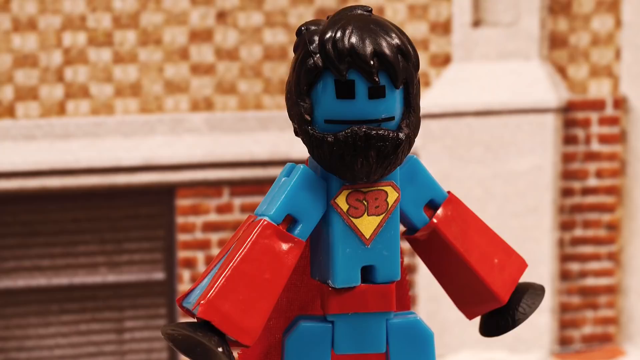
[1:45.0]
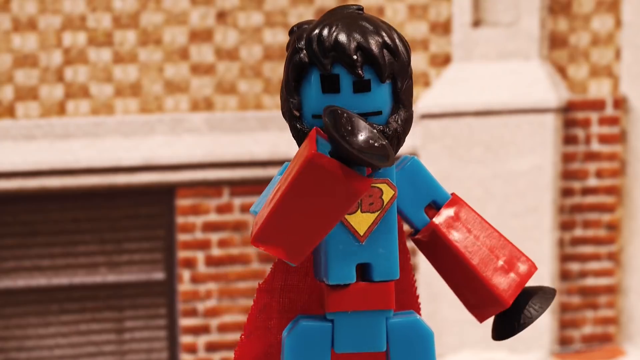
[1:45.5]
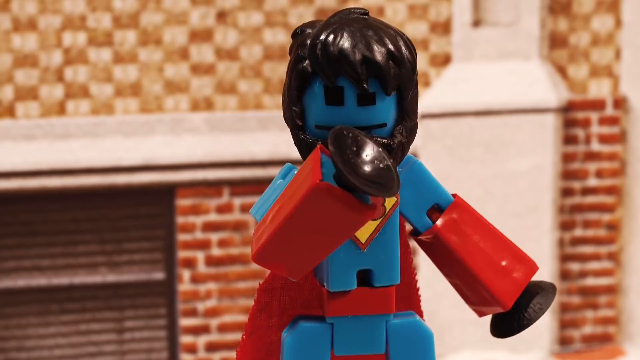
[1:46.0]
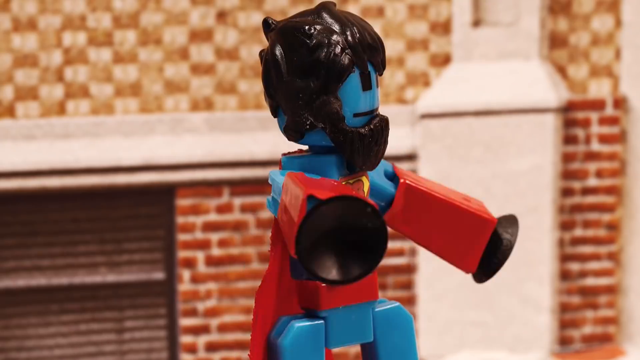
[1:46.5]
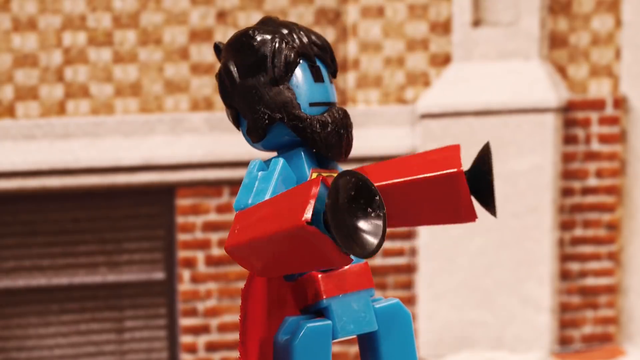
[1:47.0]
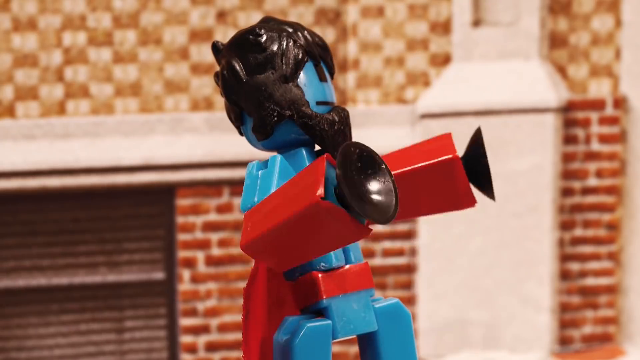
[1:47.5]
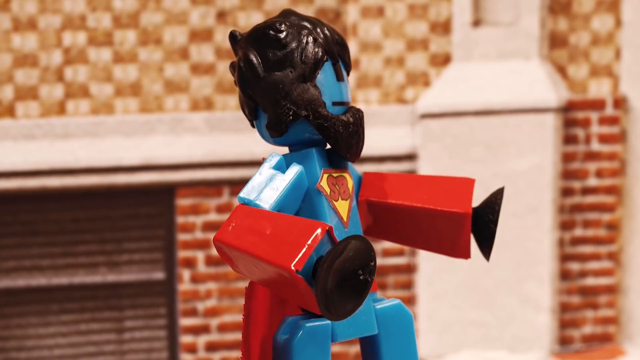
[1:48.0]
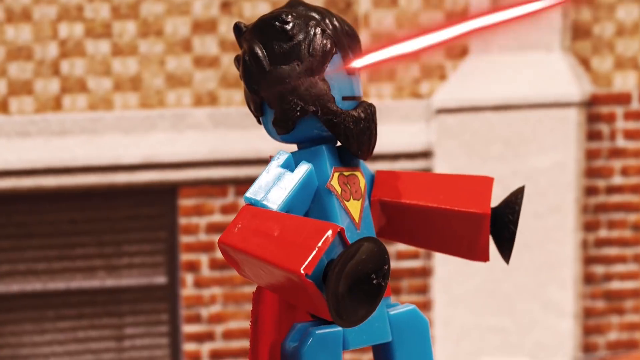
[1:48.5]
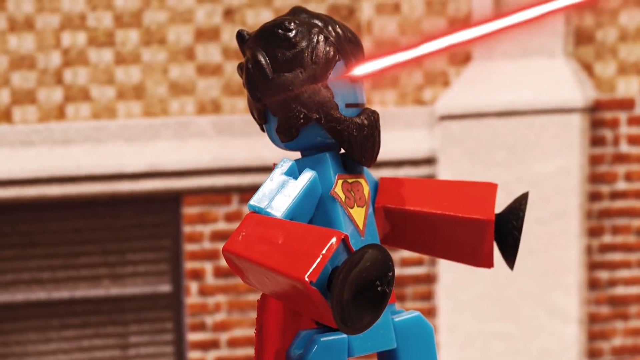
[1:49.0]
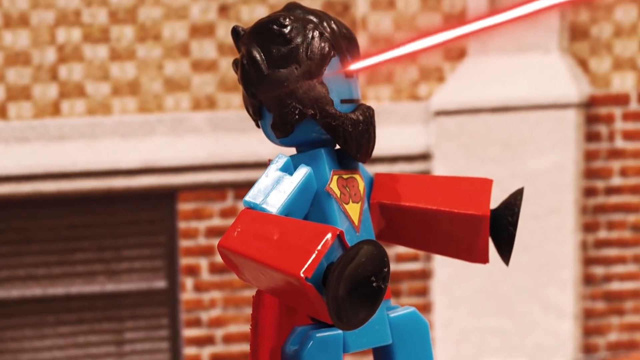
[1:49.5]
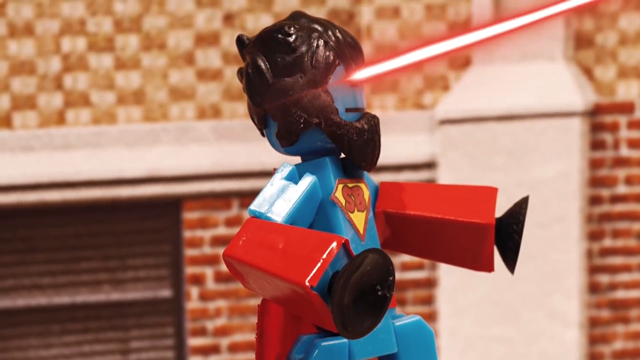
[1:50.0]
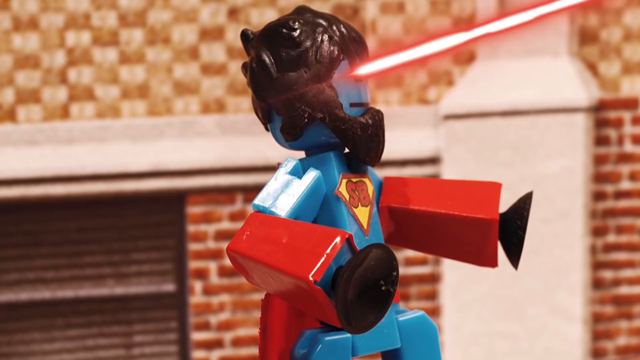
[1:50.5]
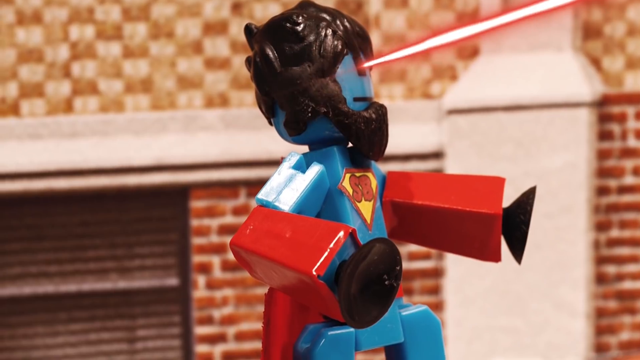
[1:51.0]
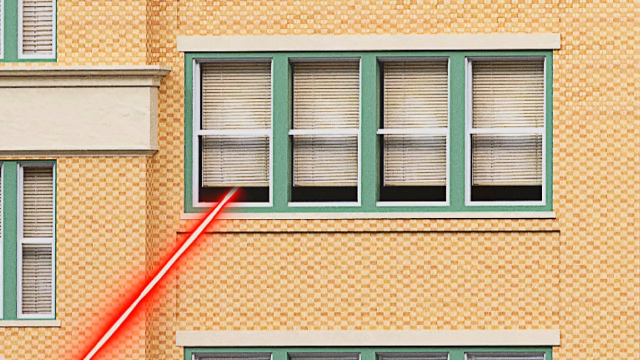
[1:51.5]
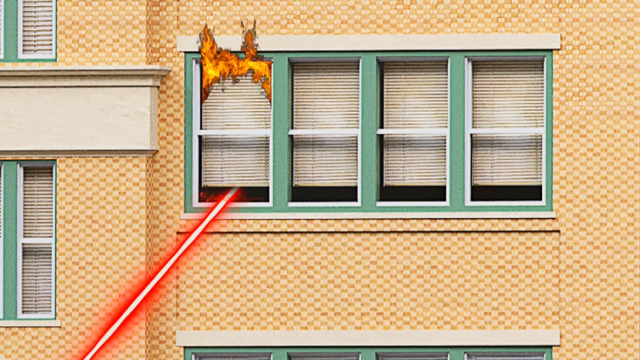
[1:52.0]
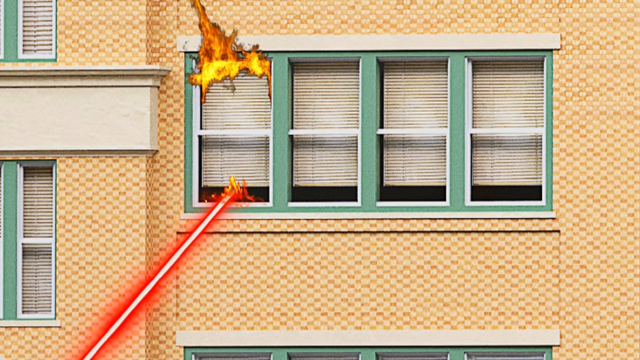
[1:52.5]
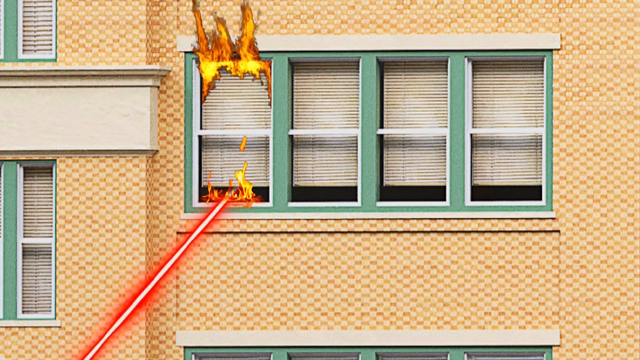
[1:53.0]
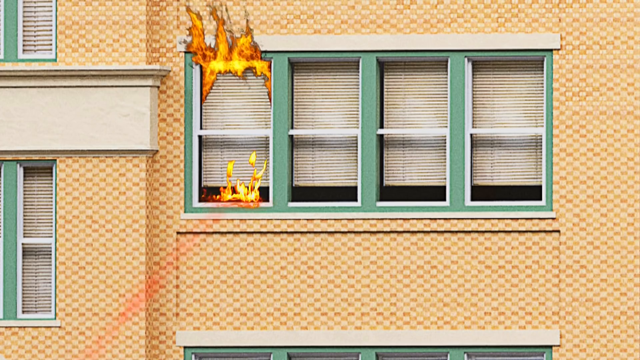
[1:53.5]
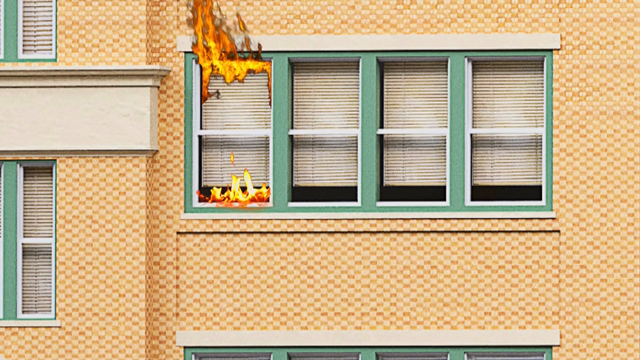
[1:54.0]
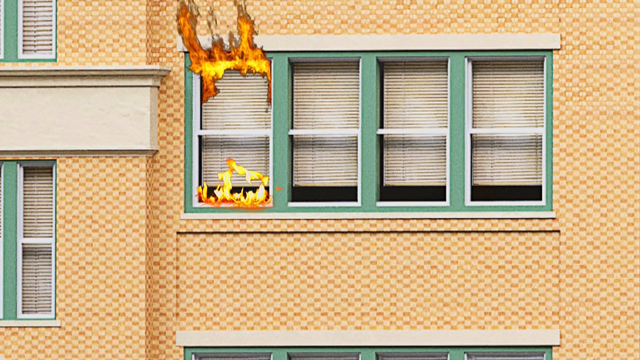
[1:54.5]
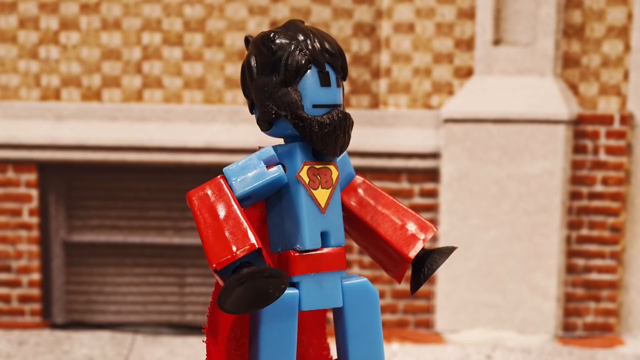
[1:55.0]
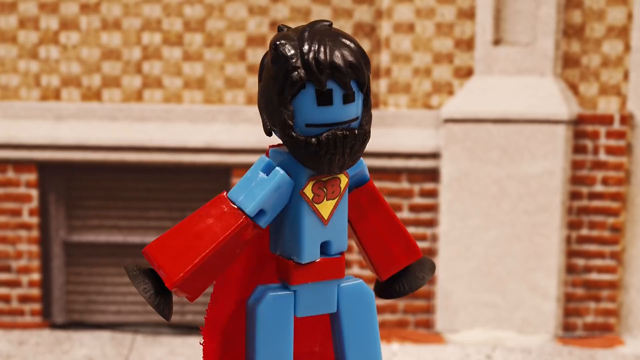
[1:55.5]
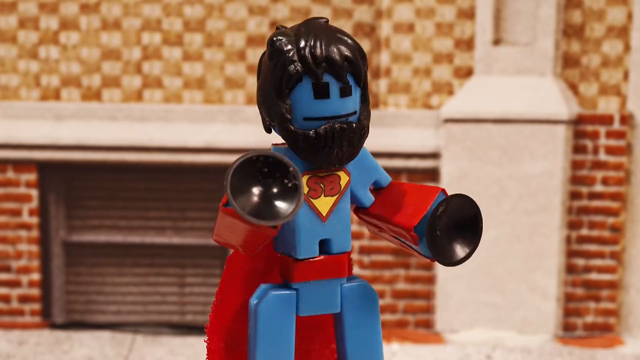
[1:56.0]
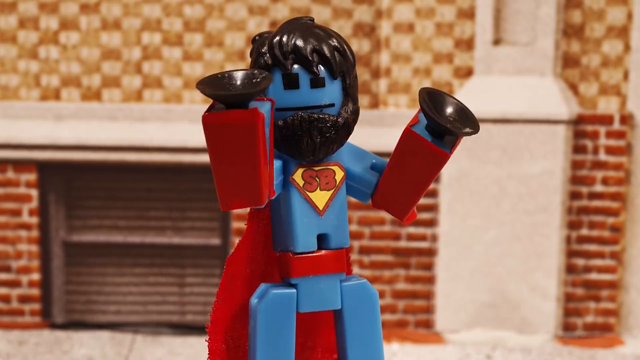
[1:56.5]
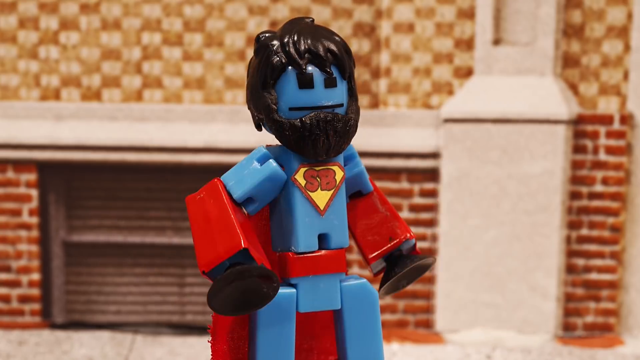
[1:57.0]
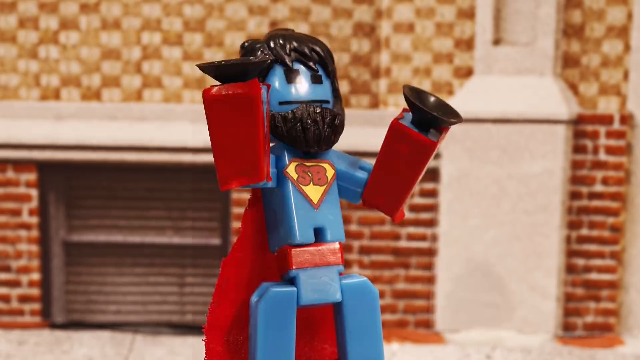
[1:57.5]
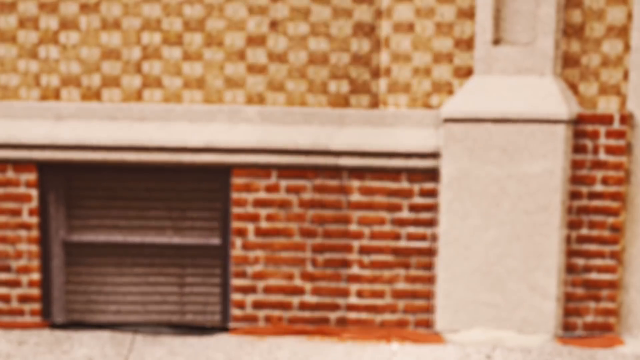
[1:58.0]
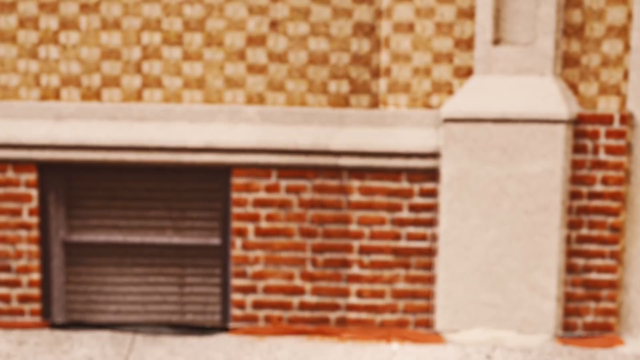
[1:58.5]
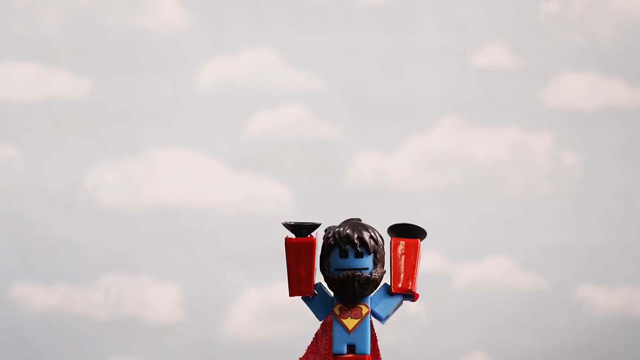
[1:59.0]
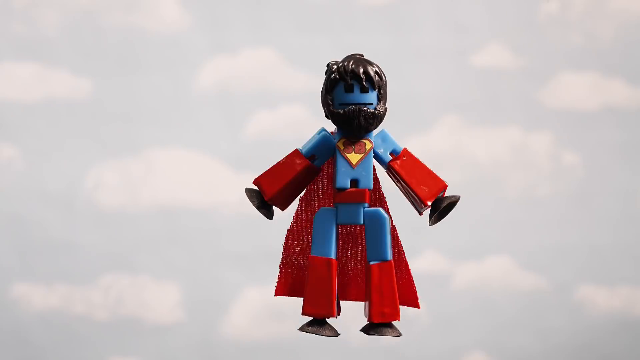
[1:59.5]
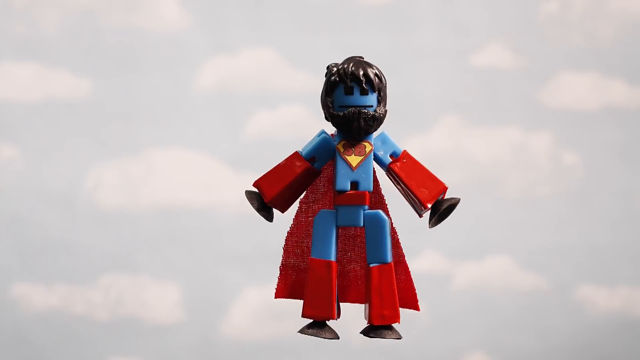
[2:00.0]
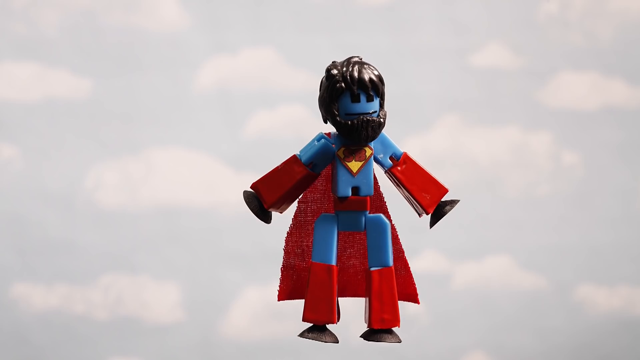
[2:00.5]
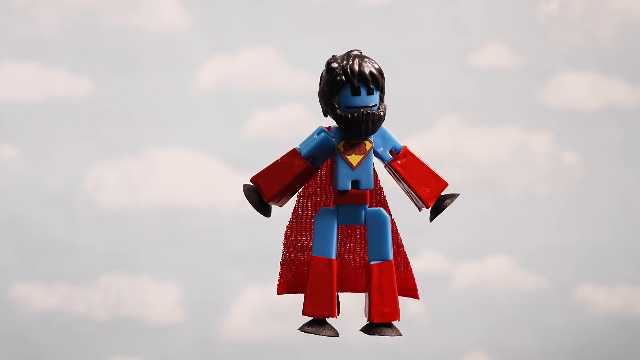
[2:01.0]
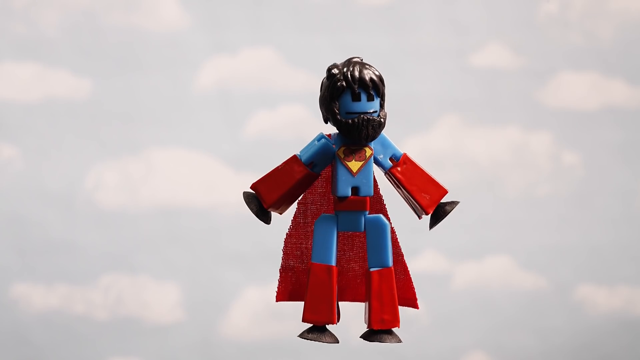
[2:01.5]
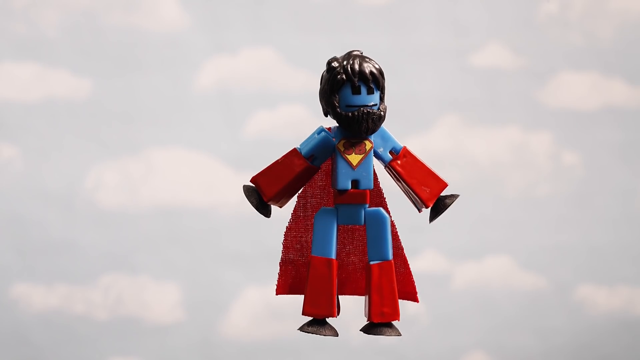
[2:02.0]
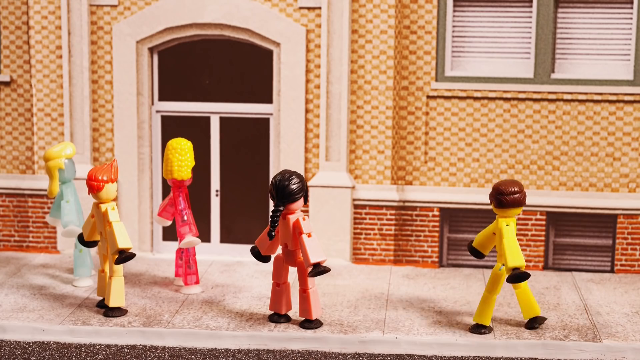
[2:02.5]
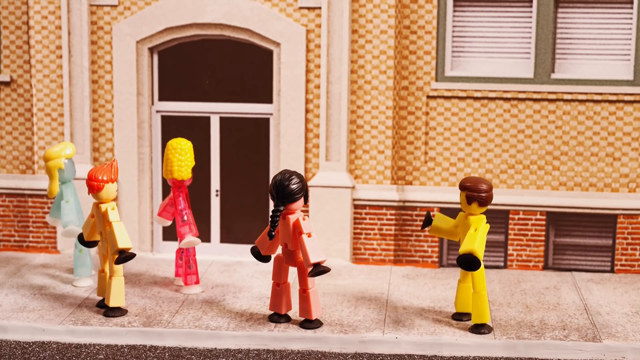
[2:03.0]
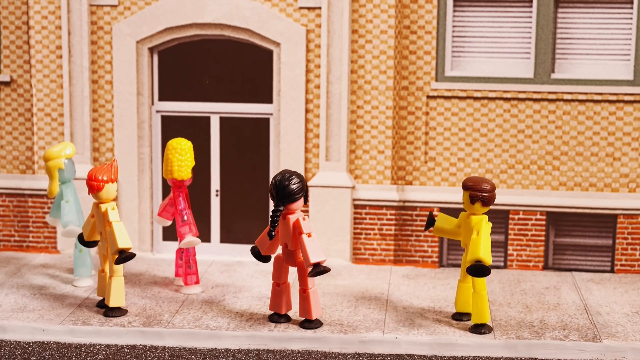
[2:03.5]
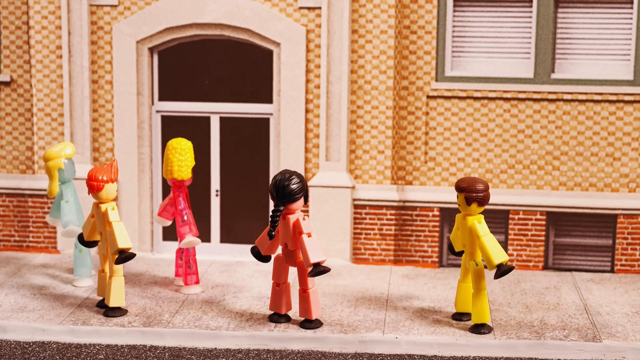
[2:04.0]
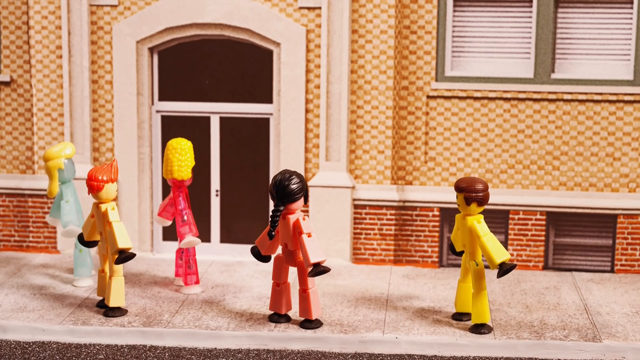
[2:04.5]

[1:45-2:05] A stop motion animated blue figurine that kind of looks like a robot has shaggy black hair and a beard, a red cape, and a blue and red costume. The camera focuses on this Superman-like figure, which seems to cough into its hand. It looks up at a window, and red lasers shoot out of its eyes, hitting the window, which catches on fire. The figurine then flies off into the sky, which is light gray with white clouds and looks quite cloudy. The scene changes to the street, where a bunch of figurines of various colors, with different hair colors and hairstyles, are all looking up at the window. A yellow figurine approaches and seems to speak to a pink figurine, and the pink figurine turns to the yellow figurine.